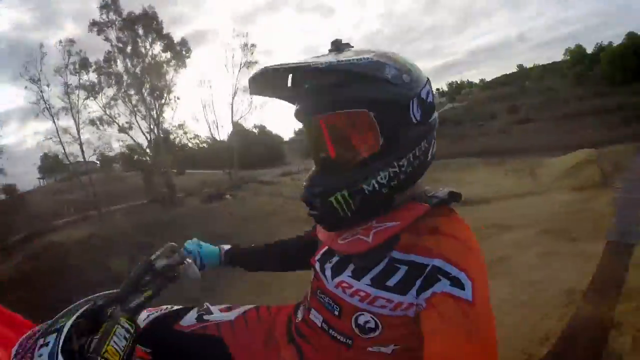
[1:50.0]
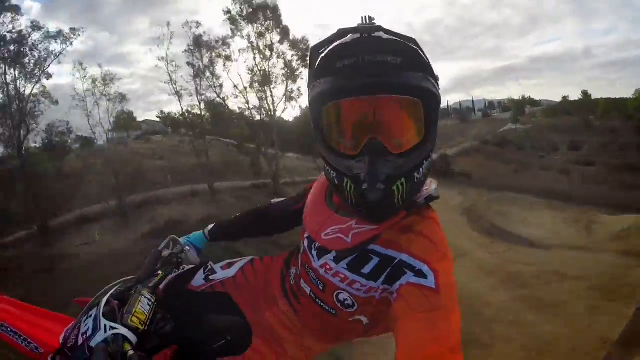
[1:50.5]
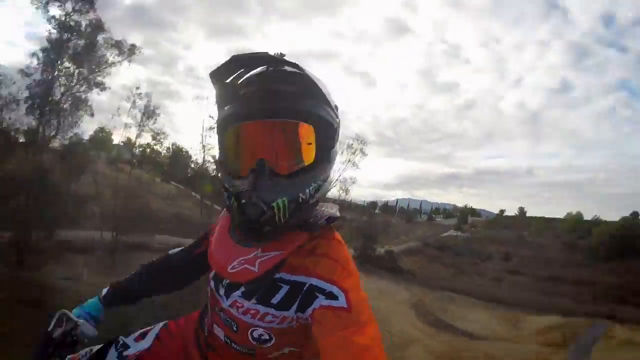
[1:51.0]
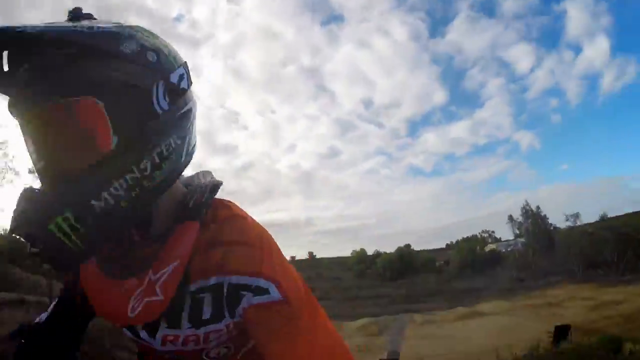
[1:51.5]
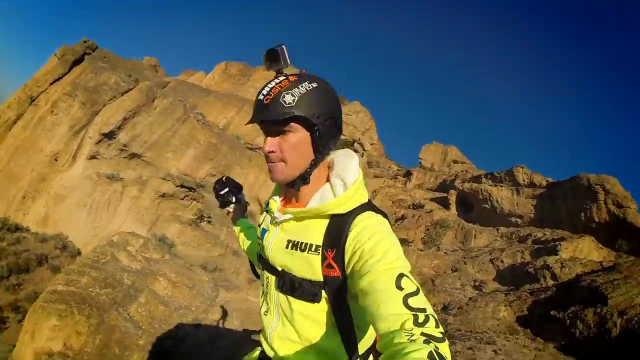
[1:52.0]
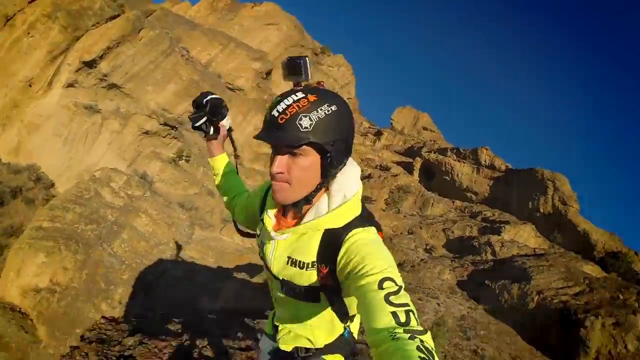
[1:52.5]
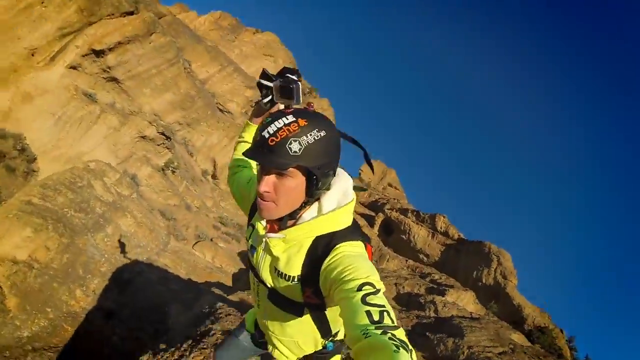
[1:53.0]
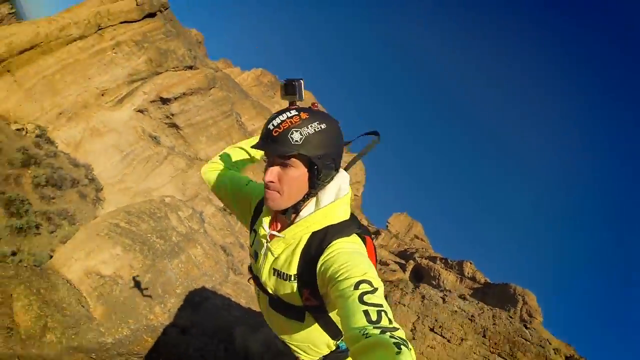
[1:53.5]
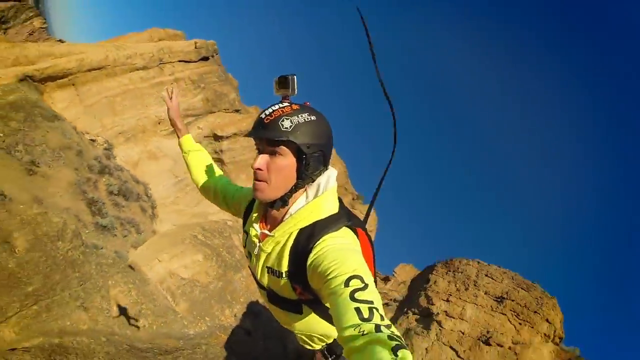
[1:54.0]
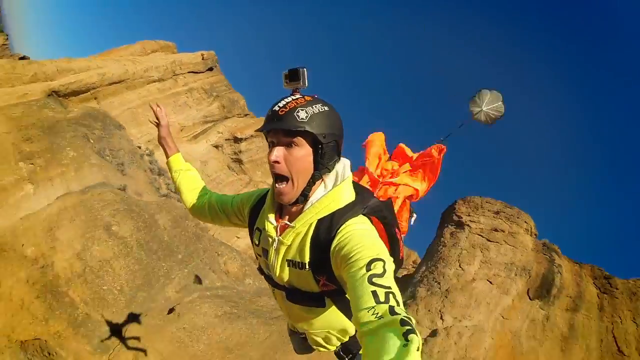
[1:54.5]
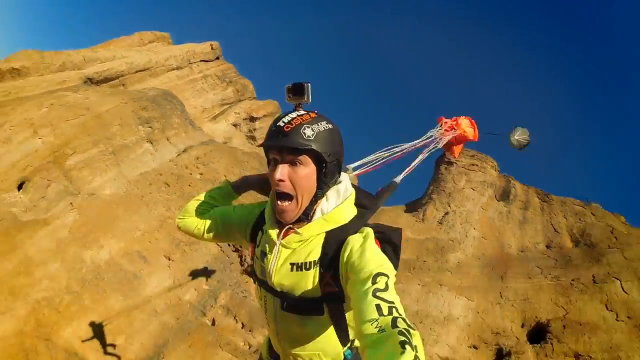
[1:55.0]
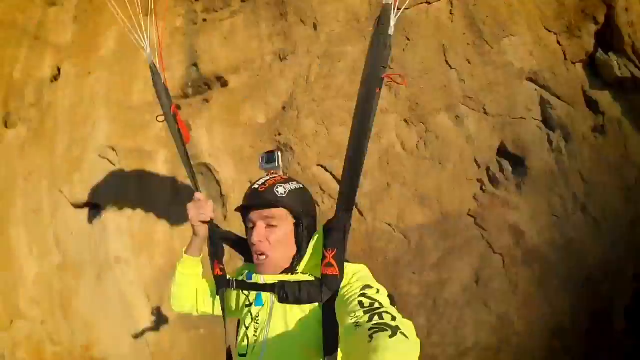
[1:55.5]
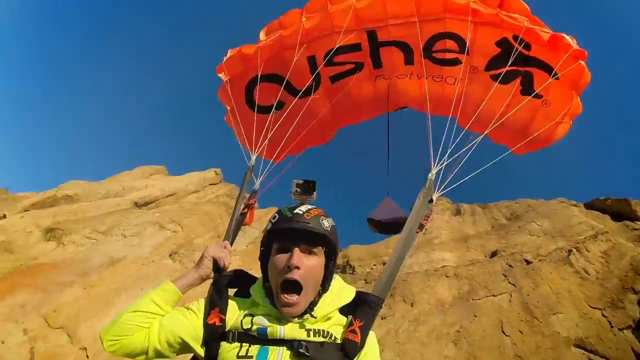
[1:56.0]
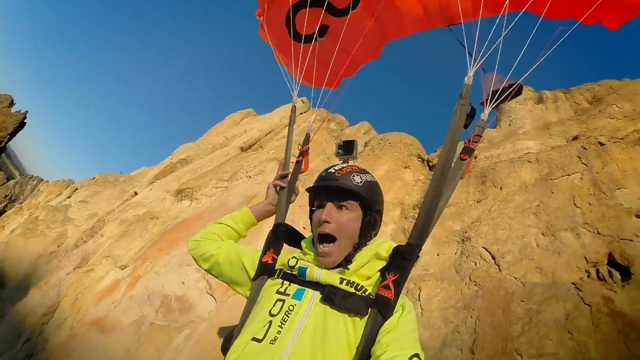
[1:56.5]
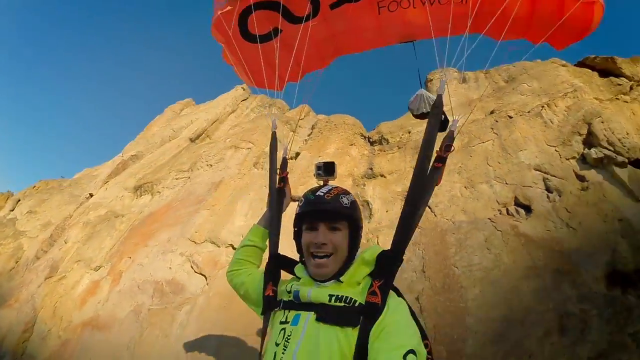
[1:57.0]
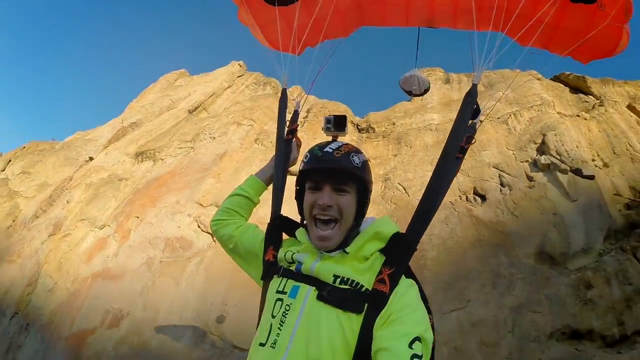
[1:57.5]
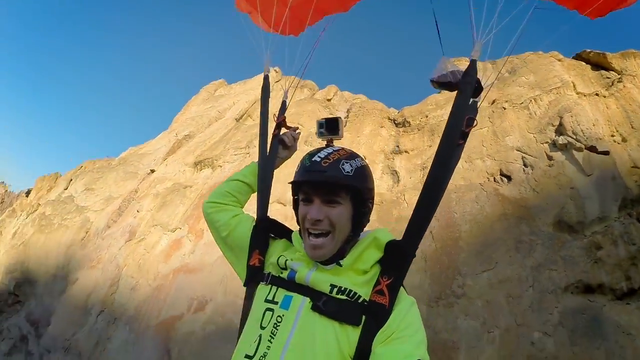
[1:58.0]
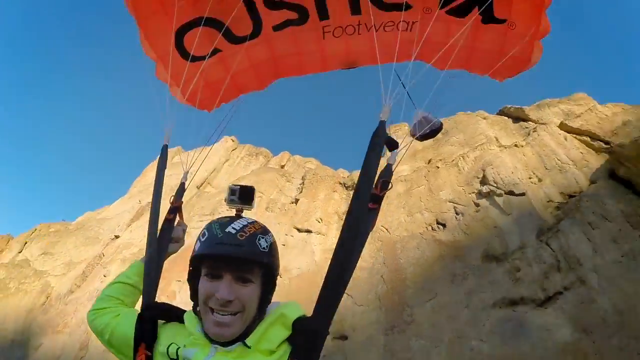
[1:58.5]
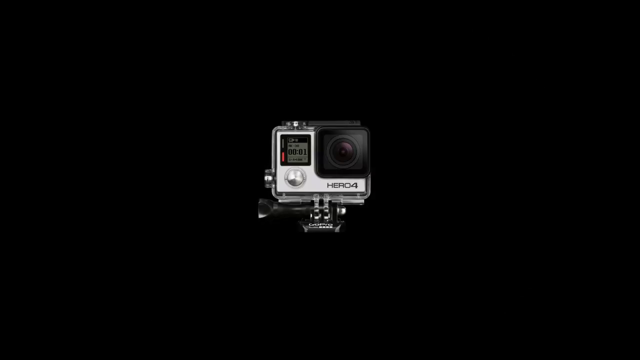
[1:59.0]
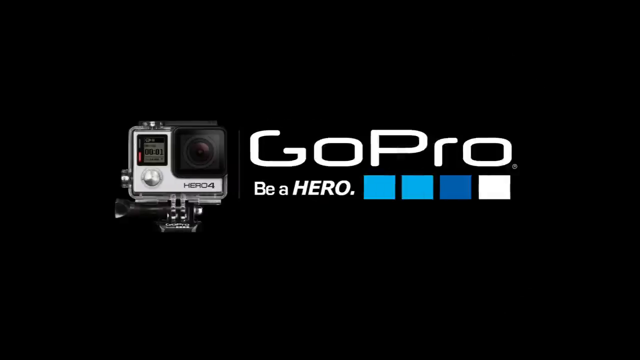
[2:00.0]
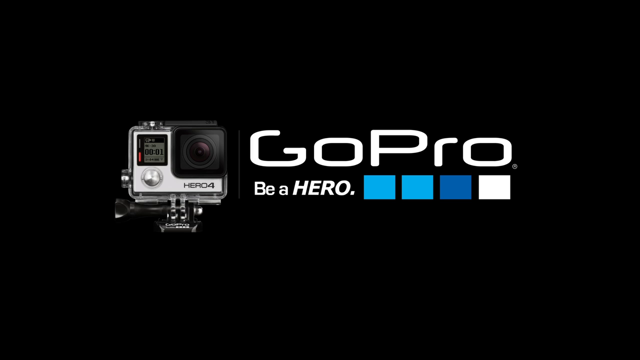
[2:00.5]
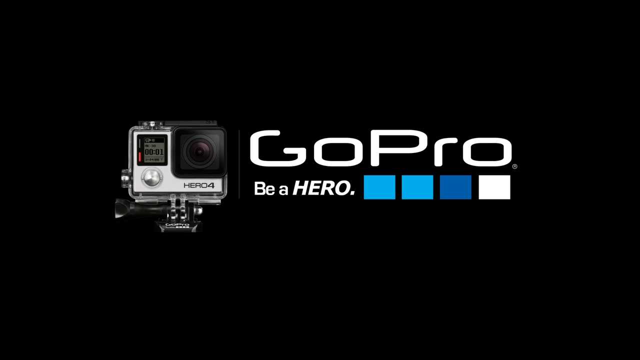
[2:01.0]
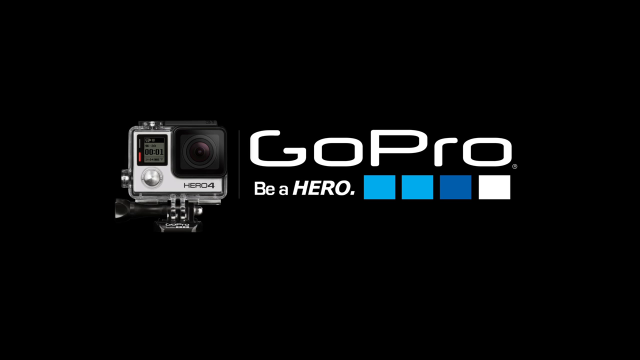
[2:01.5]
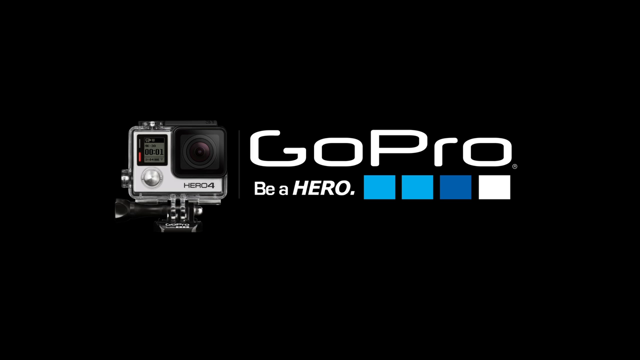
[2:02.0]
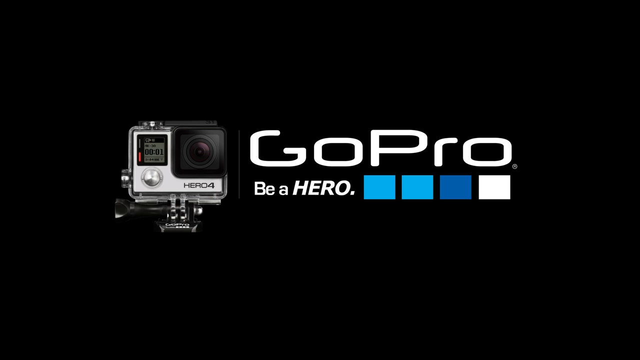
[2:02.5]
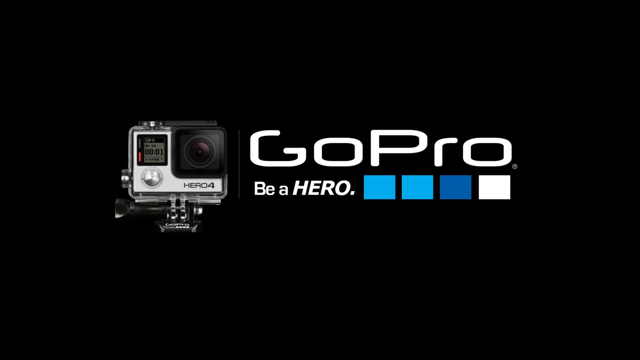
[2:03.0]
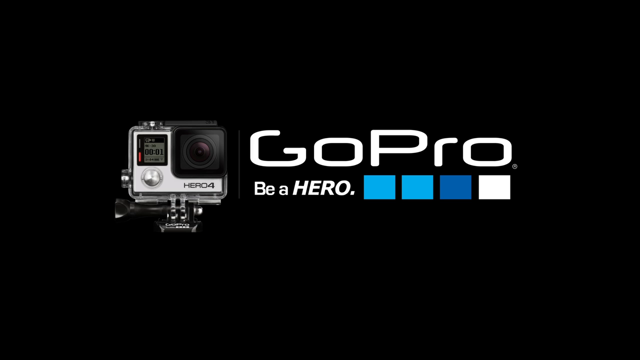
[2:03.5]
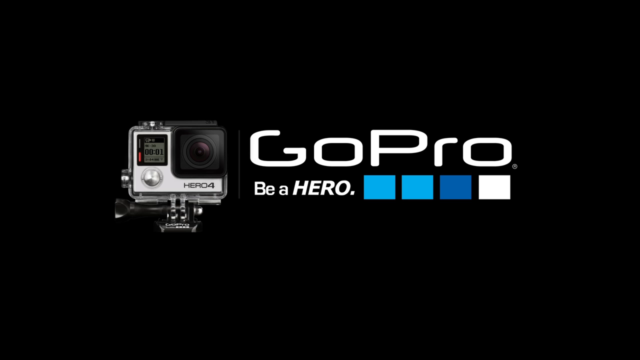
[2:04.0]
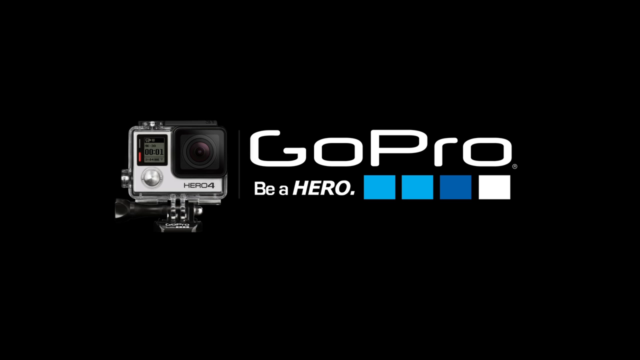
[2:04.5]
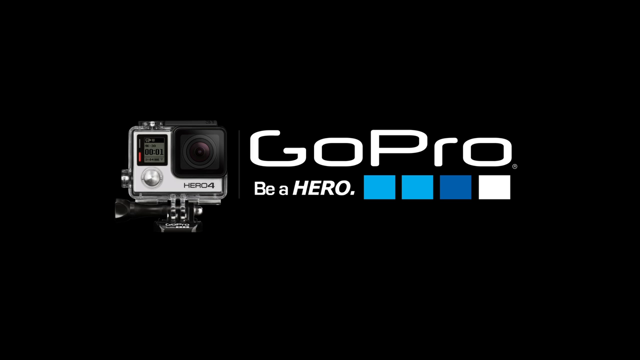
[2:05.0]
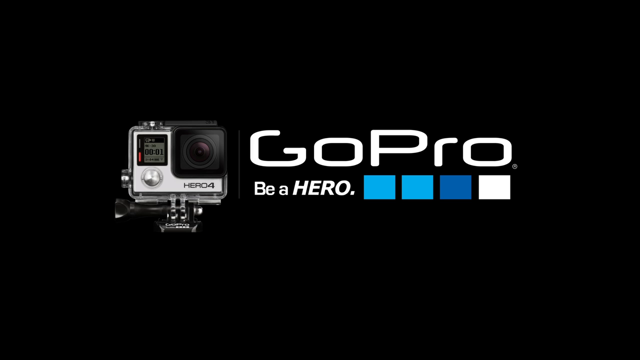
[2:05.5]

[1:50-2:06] The dirt biker gives a point-of-view shot. He wears orange and a helmet with the Monster logo on it; the GoPro is not on his head but faces toward him, so it is possibly on a camera stick or attached to his dirt bike. The skydiver, apparently about to take off, holds a selfie stick and jumps off. He throws the parachute, his mouth wide open, apparently surprised or scared, and then holds on to the parachute as it works. The video ends the same way it started, with the picture of the Hero 4 camera and the GoPro logo.